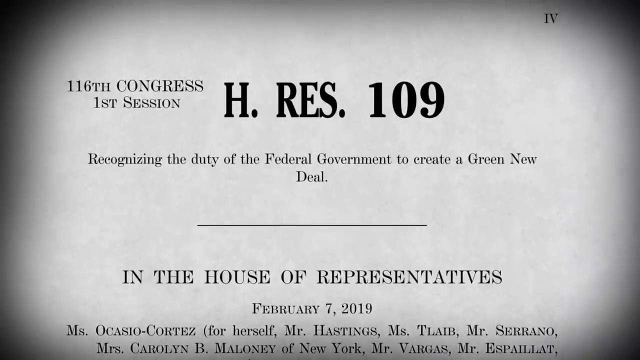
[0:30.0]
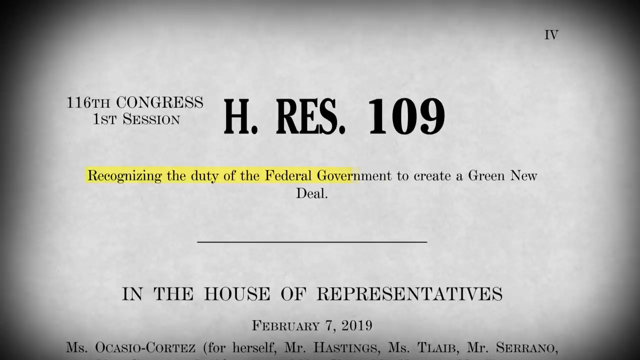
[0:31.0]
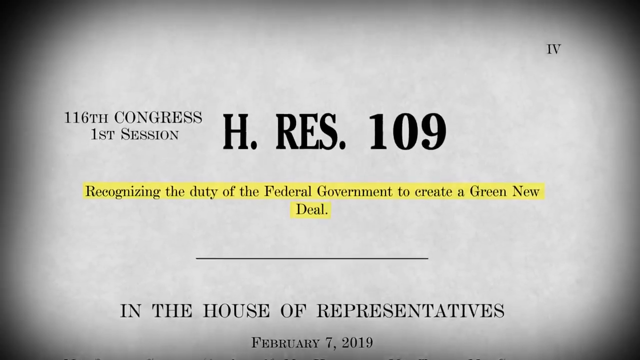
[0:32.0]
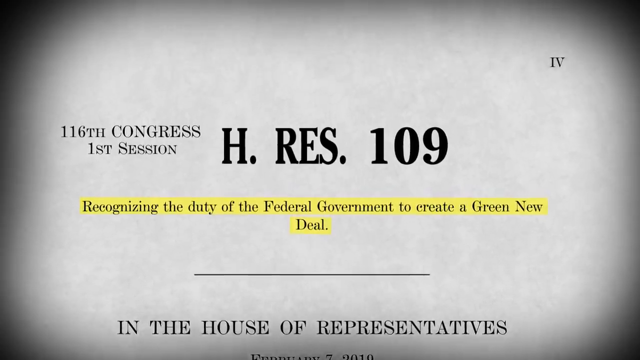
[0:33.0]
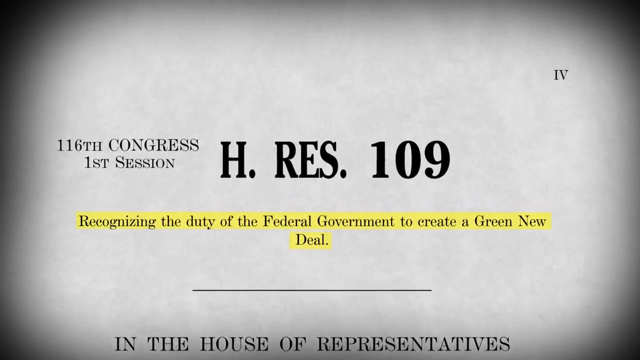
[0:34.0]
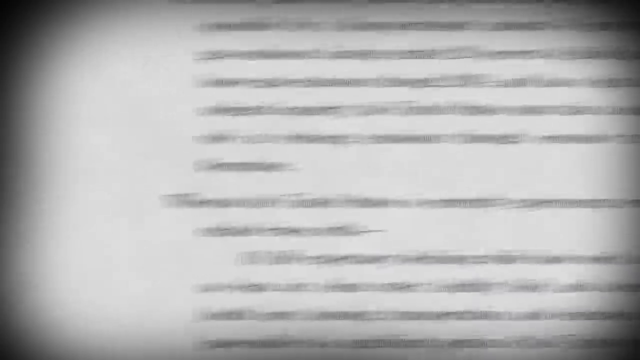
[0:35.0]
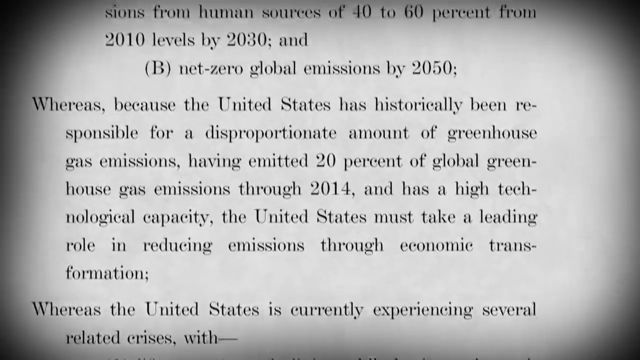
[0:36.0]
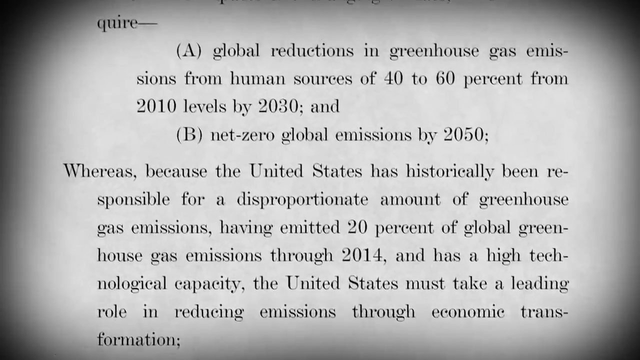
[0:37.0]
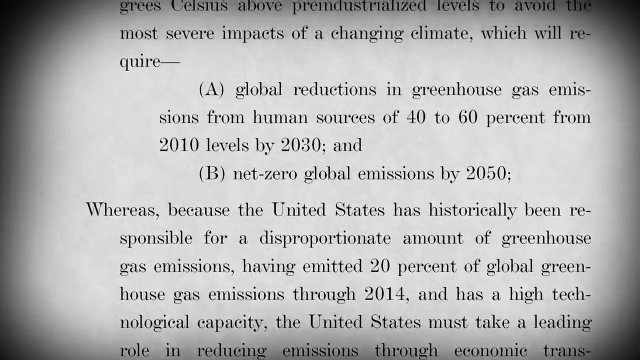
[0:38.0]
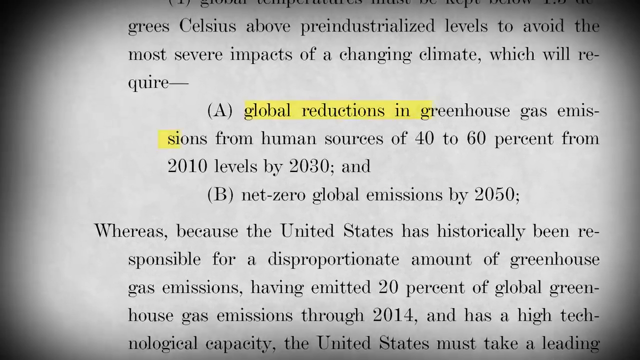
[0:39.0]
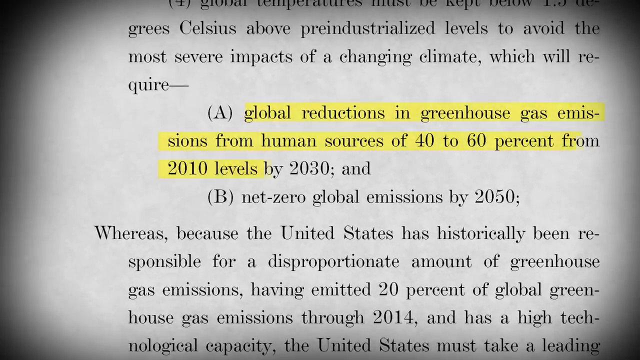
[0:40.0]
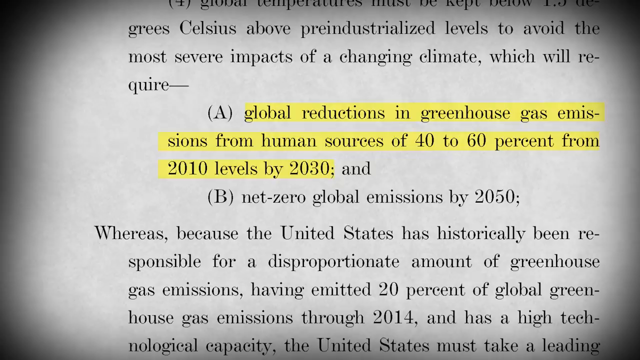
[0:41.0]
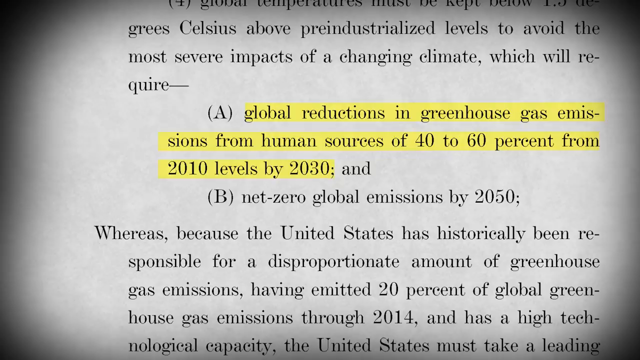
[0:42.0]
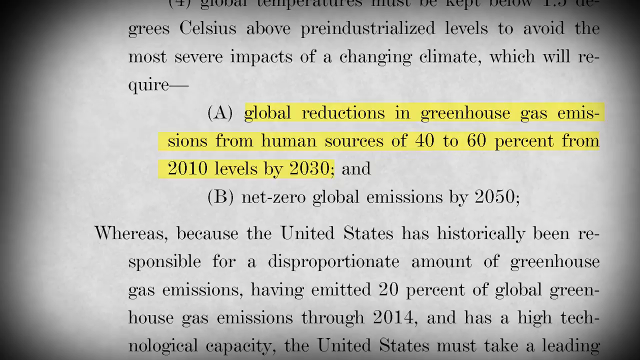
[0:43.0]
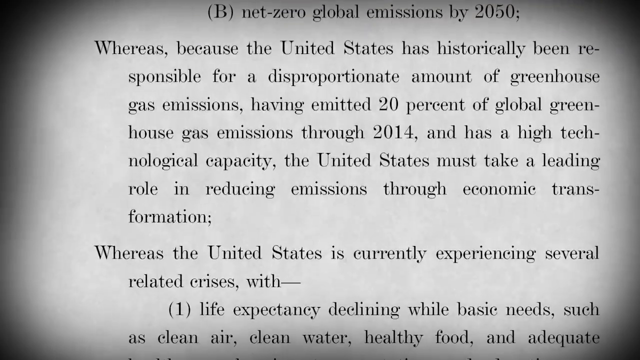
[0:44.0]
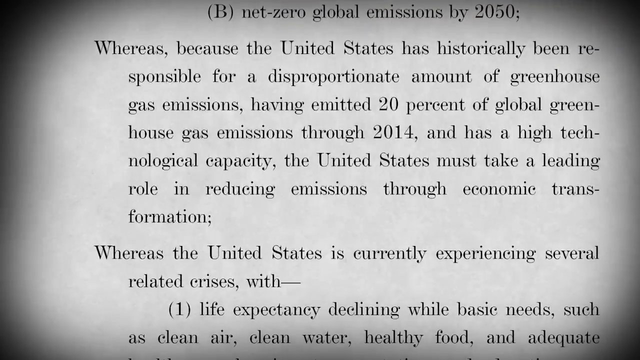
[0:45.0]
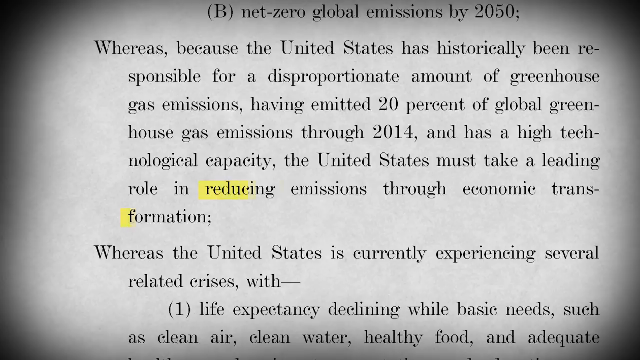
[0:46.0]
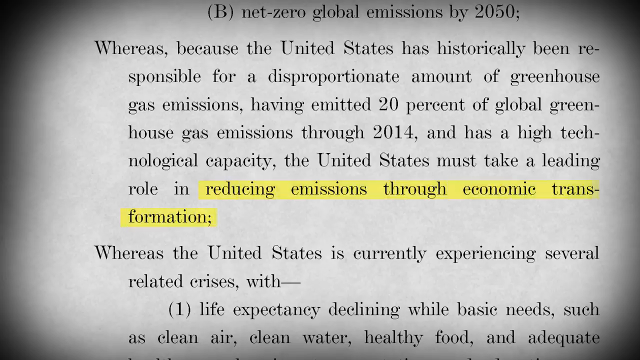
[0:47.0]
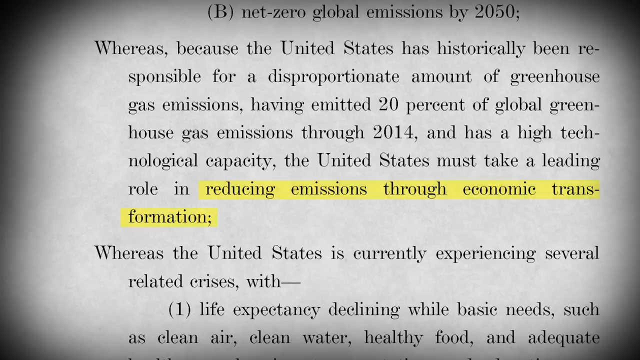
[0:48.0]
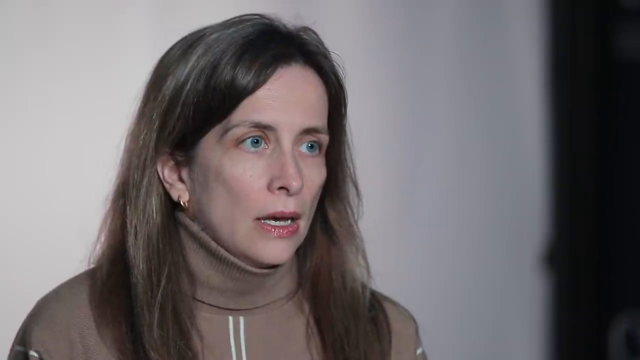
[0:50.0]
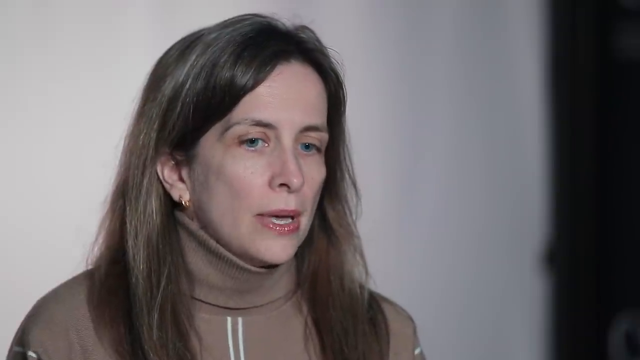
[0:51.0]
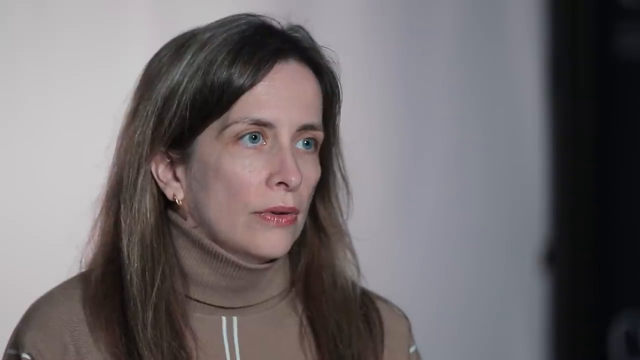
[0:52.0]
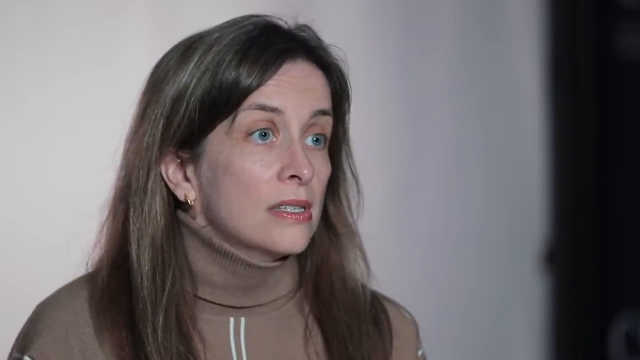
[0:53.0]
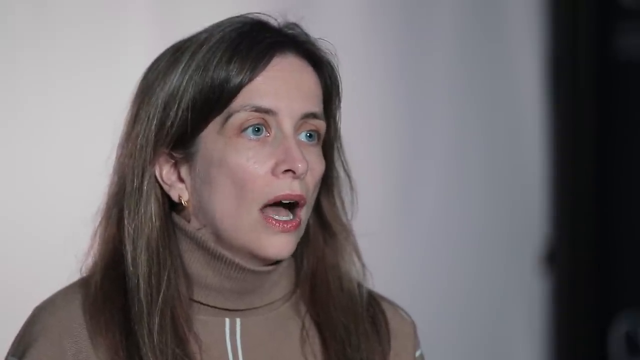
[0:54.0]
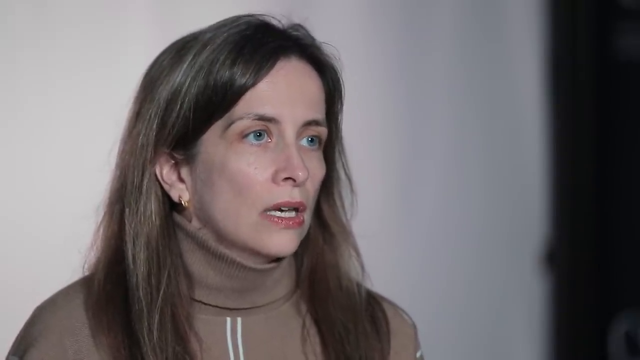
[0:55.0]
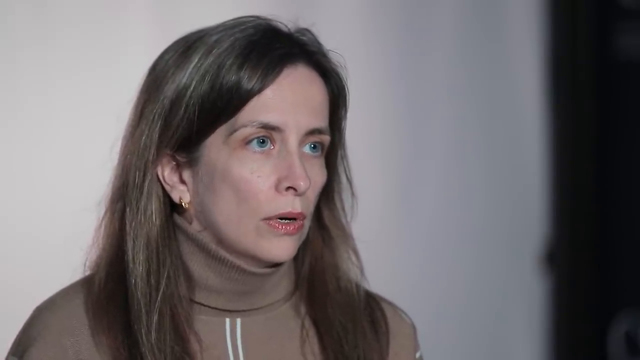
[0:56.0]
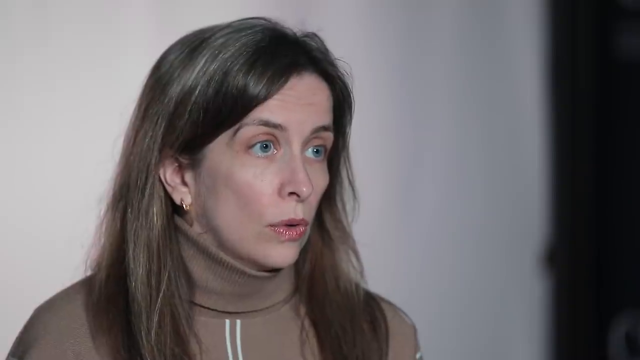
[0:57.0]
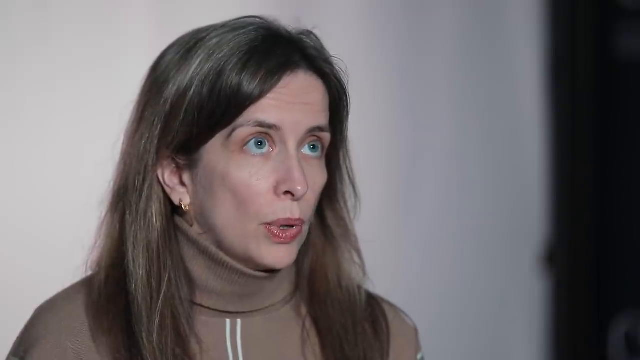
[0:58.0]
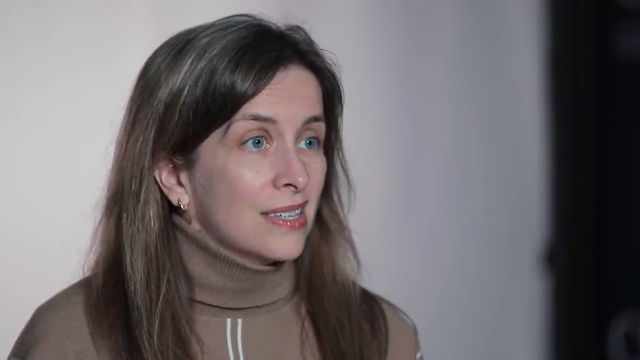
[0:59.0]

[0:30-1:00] A document that looks like a bill has black lettering on a white background. The top left reads "116th Congress first session", the center reads "H.RES.109", and underneath it says "recognizing the duty of the federal government to create a Green New Deal". Below that is a black line, and below it the text reads "in the House of Representatives", then "Feb 17th, 2019". It also names "Ms. Ocasio-Cortez" followed by "for herself, Mr. Hastings, Mr. Taibbi, Mr. Suriano". The phrase "recognizing the duty of the federal government to create a Green New Deal" is then highlighted in yellow. Next, the white sheet of paper with black text scrolls up and highlights "global reductions in greenhouse gas emissions from human sources of 40 to 60 percent from 2010 levels"; the rest, not highlighted in yellow, reads "by 2030" and "B) net zero global emissions by 2050". It scrolls down again and highlights "reducing emissions through economic transformation". The image then returns to the woman with brown hair and a brown turtleneck top with white lines running down it. There is a white background behind her and a black background on the right side. She looks downwards and speaks to an interviewer who is out of camera range.